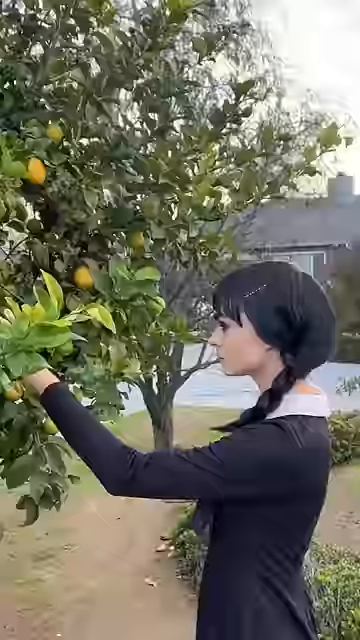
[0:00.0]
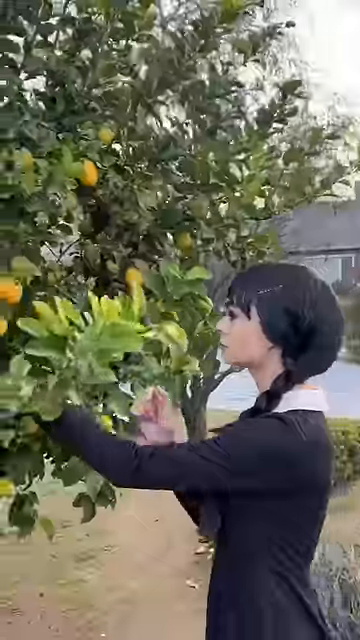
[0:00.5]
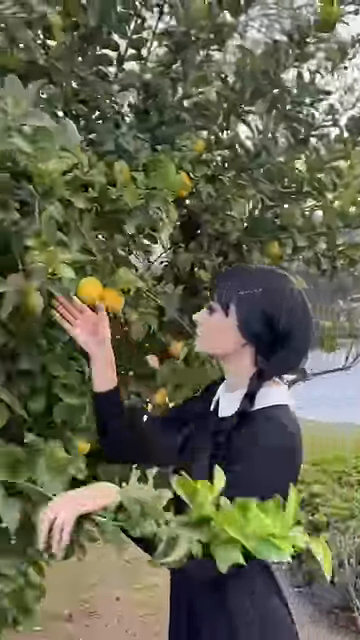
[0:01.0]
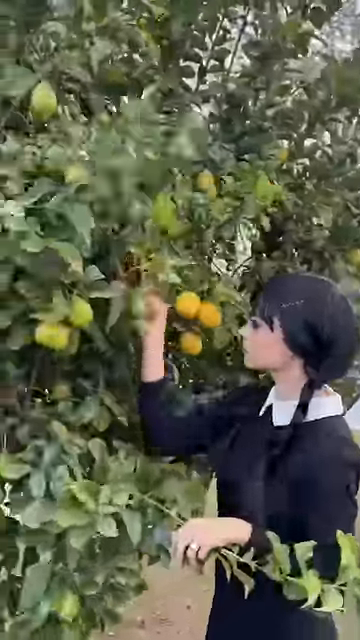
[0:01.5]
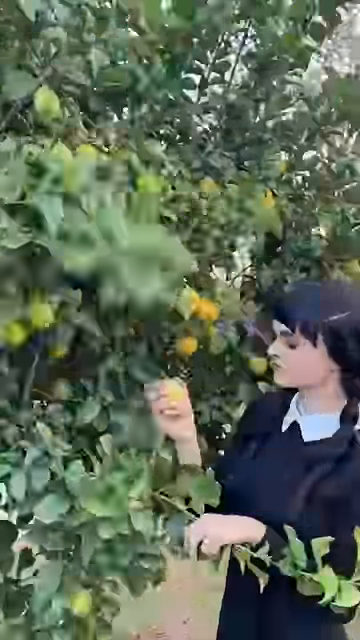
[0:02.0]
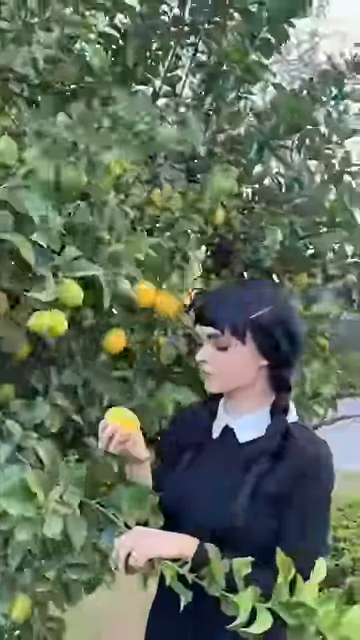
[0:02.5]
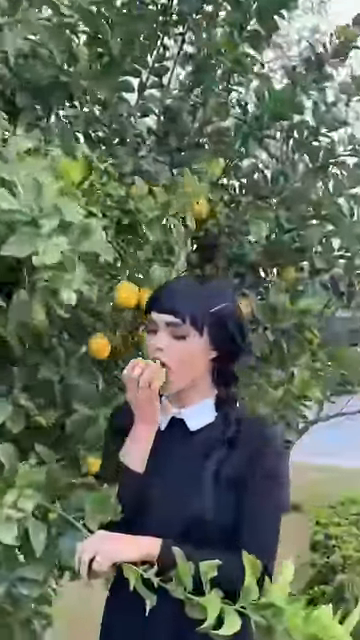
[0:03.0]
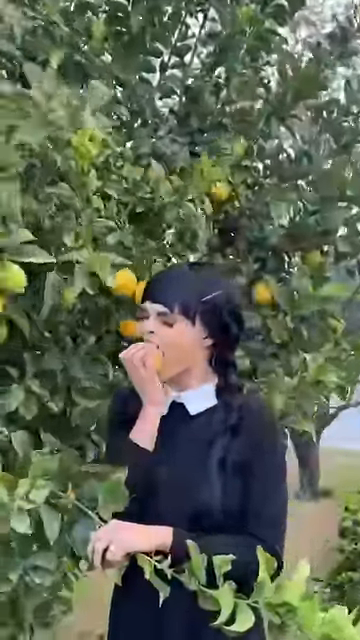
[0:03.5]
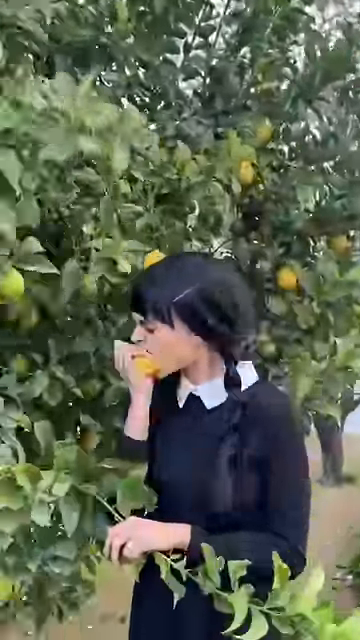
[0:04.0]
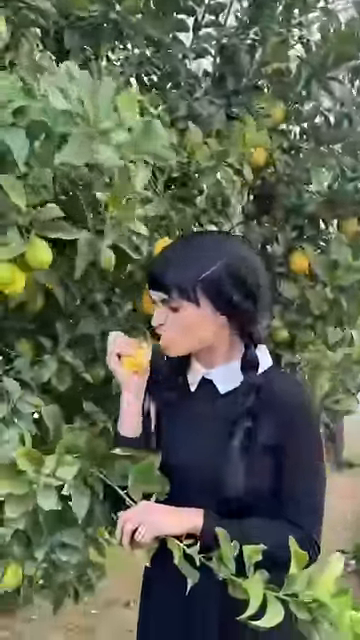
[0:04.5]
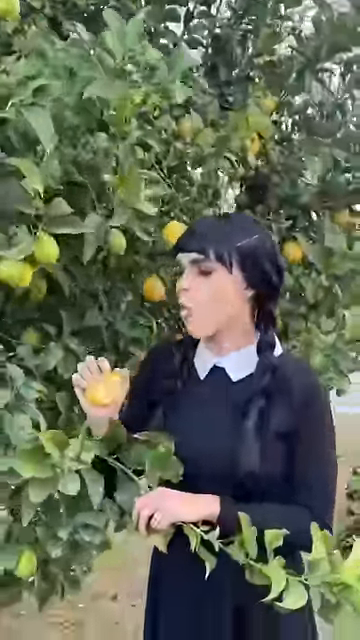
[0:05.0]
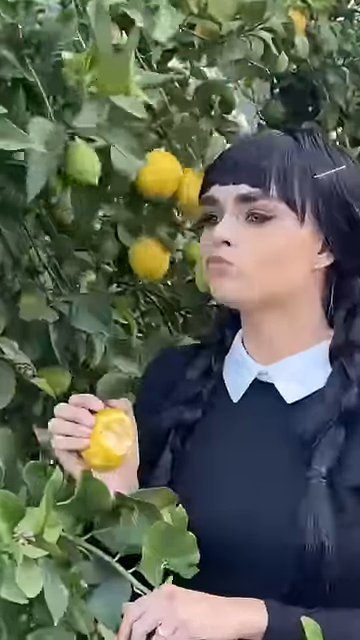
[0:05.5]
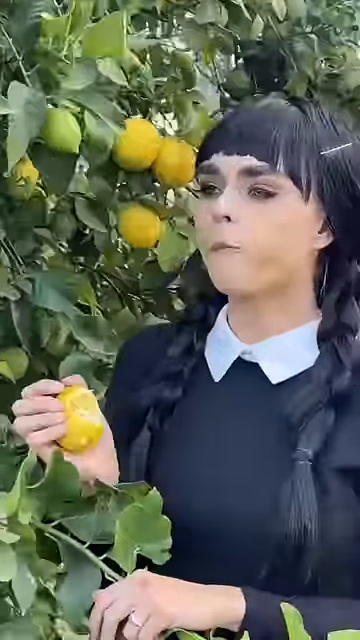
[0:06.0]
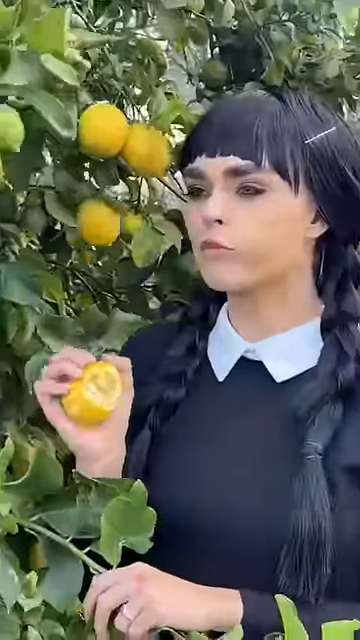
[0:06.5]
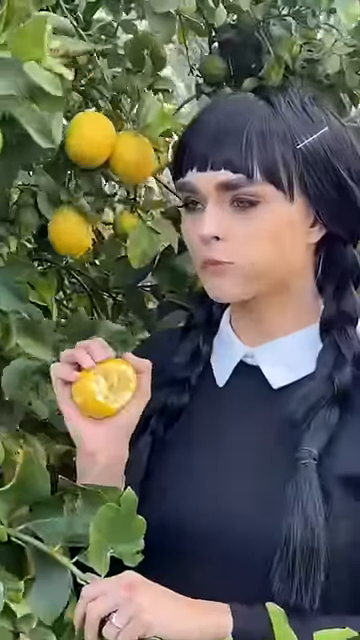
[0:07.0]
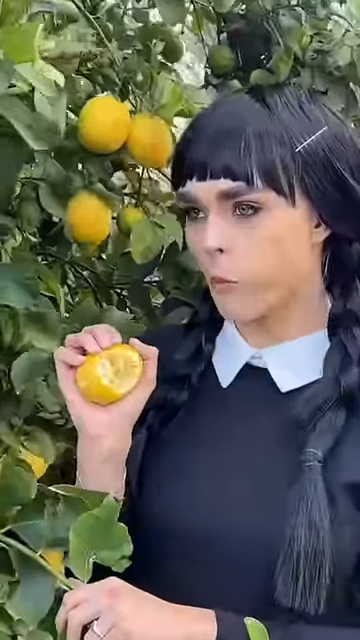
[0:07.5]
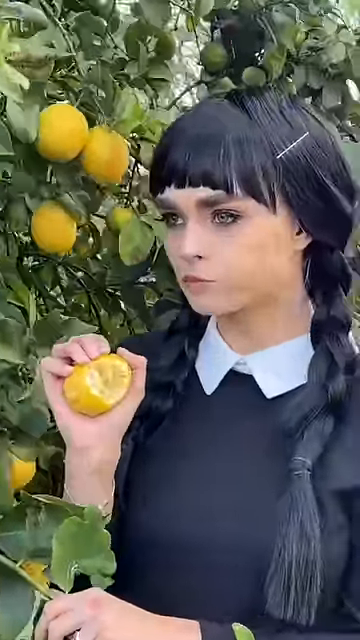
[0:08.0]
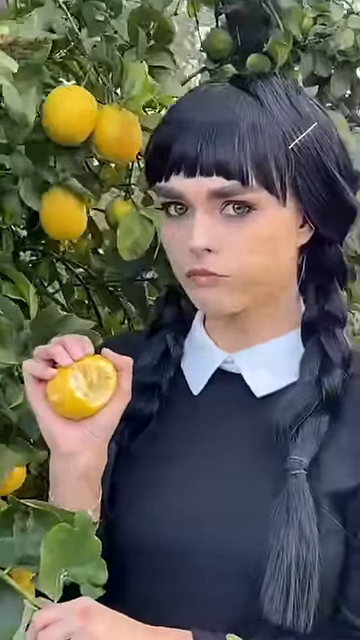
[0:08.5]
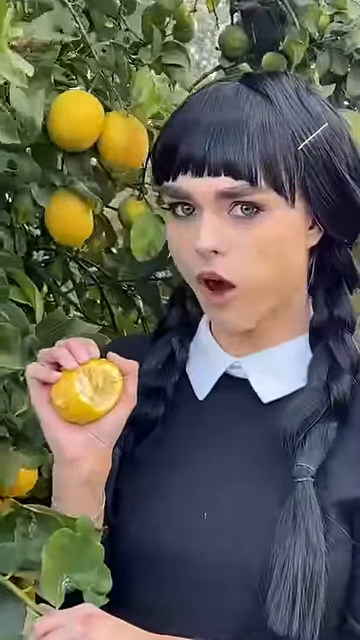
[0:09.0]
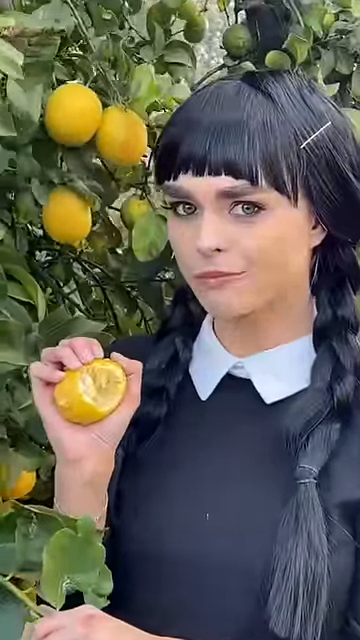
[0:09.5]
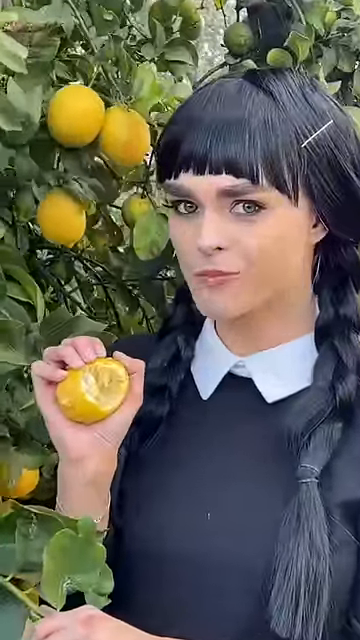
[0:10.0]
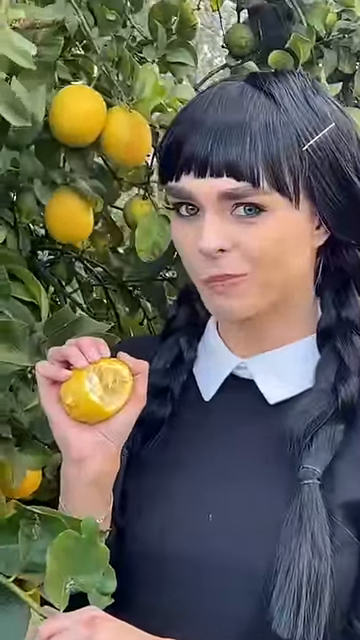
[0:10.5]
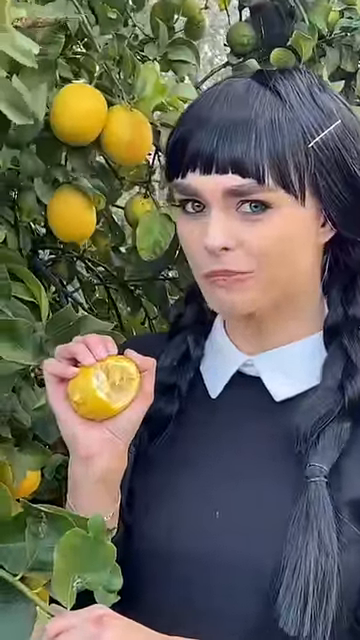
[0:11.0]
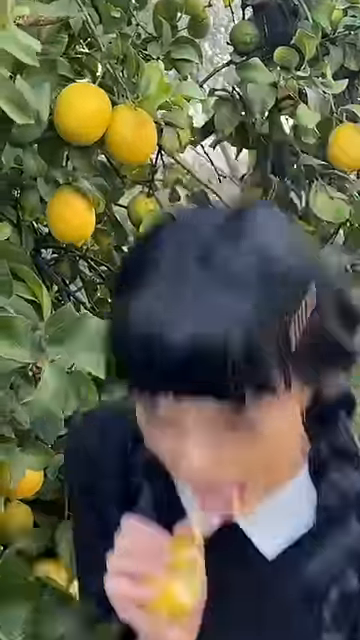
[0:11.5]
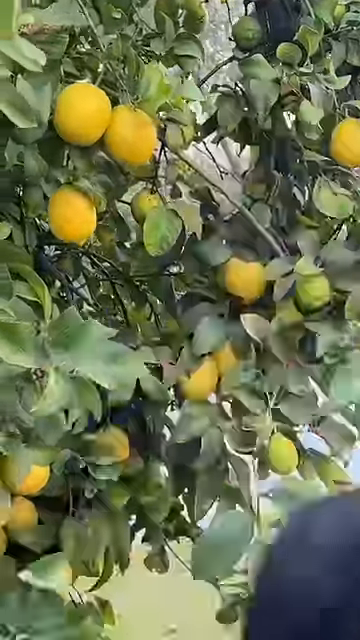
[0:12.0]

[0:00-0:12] A woman who is sort of dressed in character takes a gigantic bite out of a freshly picked lemon that she has picked off a lemon tree outside. As she chews, her expression changes from a kind of smirky smile into something like disgust, as if it is very bitter; she sort of puckers her lips and then kind of shuts her mouth, or pushes the lemon out, and the video moves on. She is very dark-haired, with very long, somewhat curved black bangs at the front of her hair. A bobby pin is clipped on the side, holding the side back, and she has a black braid on both sides, braided down the side and tied off with a little rubber band. She wears quite a bit of eye makeup, somewhat dark, going around each eye, has very manicured eyebrows, and wears some dark, possibly burgundy, lipstick. She grasps the lemon in her hand, and the large bite she has taken out of the whole lemon, including the peel, is visible.